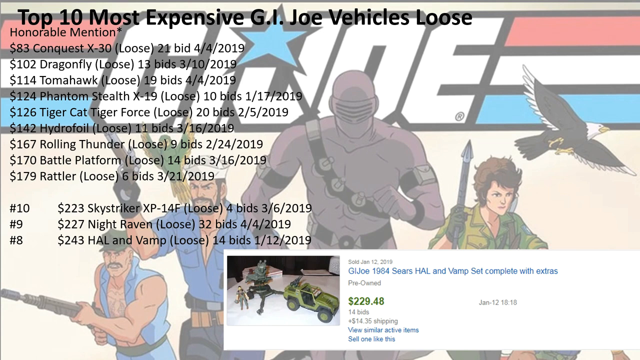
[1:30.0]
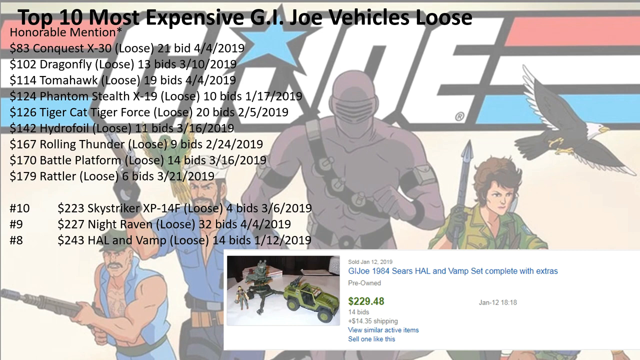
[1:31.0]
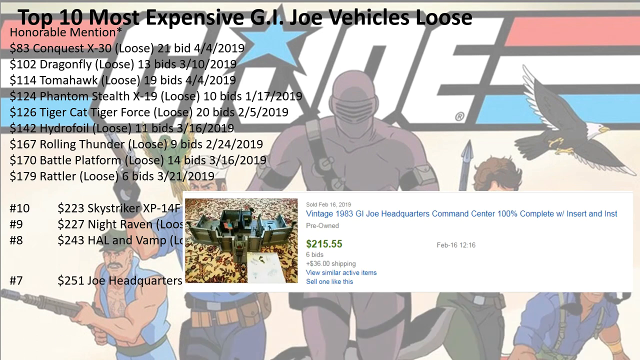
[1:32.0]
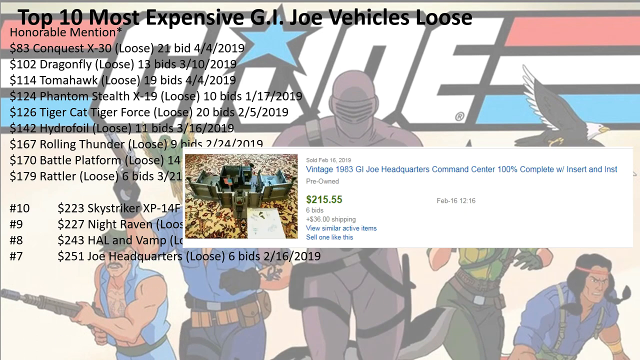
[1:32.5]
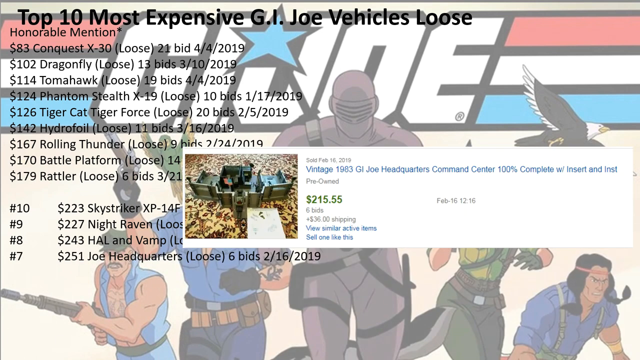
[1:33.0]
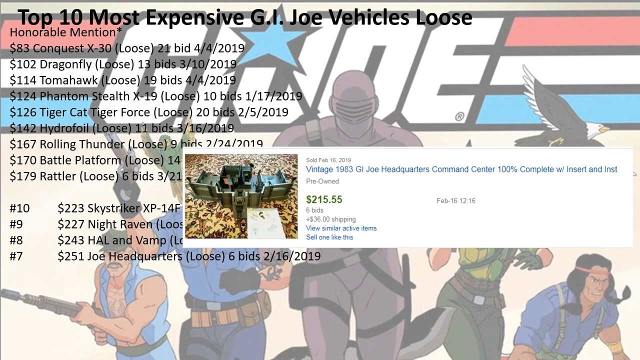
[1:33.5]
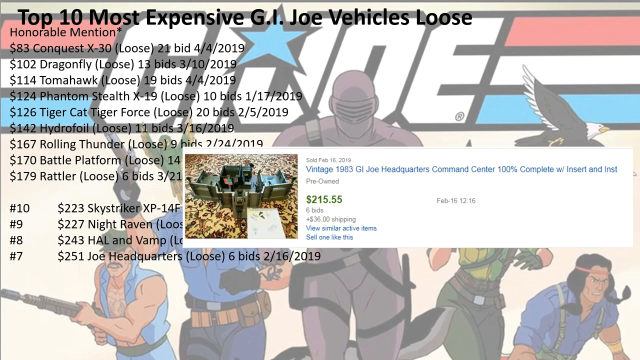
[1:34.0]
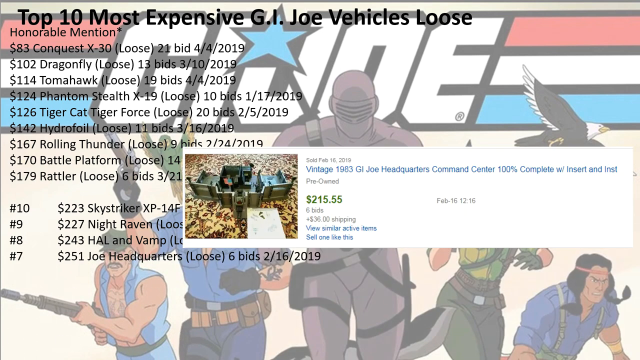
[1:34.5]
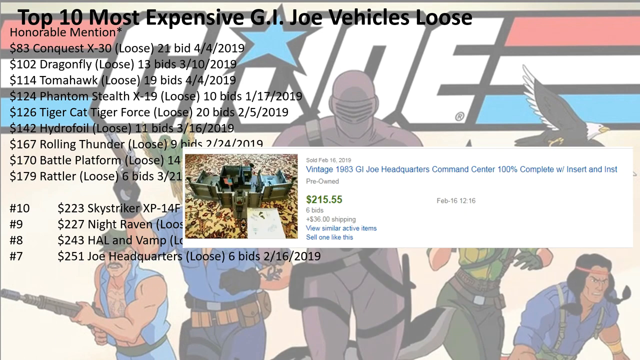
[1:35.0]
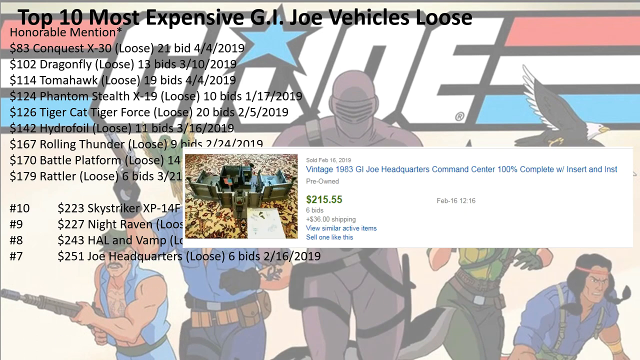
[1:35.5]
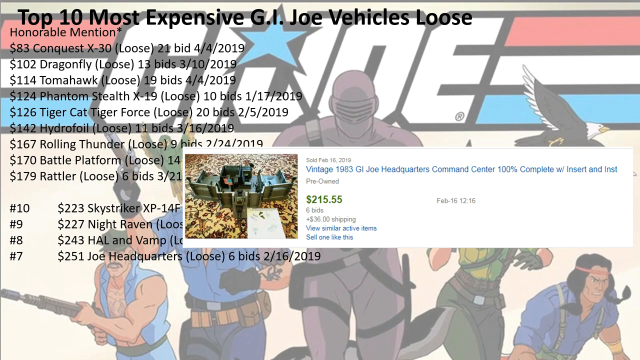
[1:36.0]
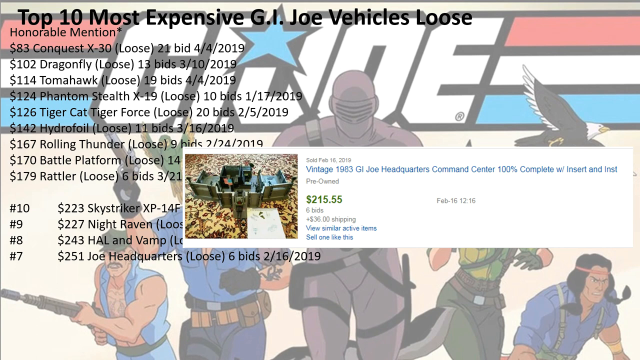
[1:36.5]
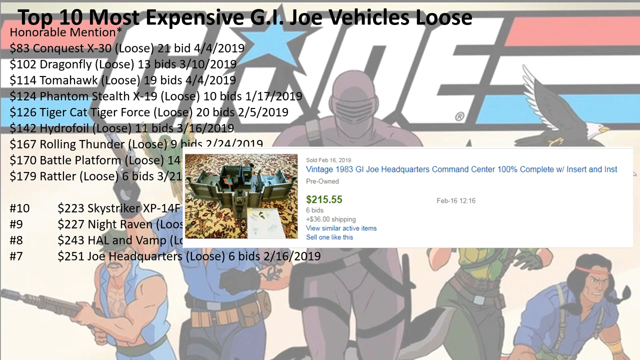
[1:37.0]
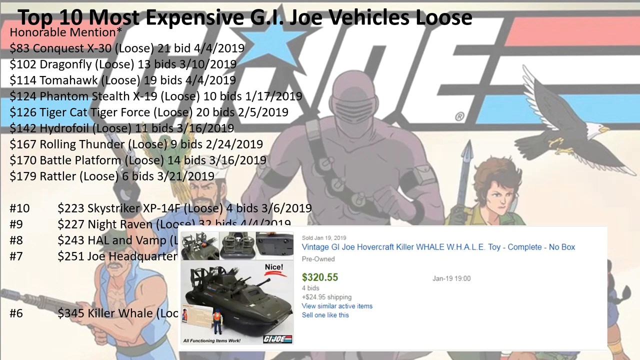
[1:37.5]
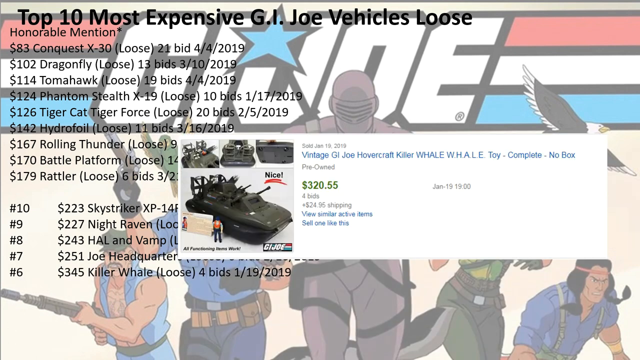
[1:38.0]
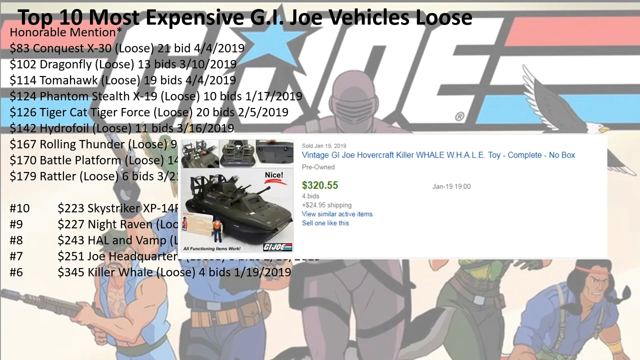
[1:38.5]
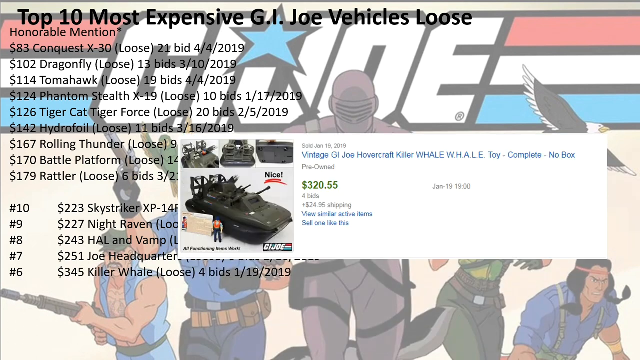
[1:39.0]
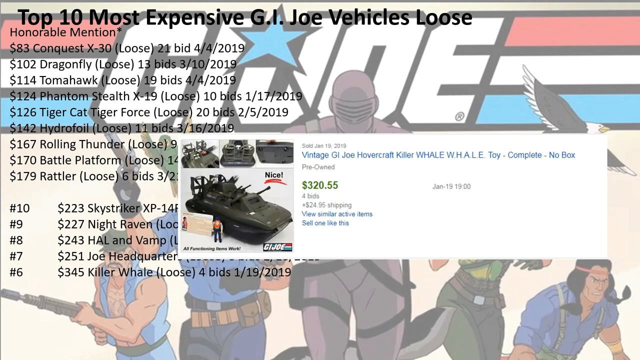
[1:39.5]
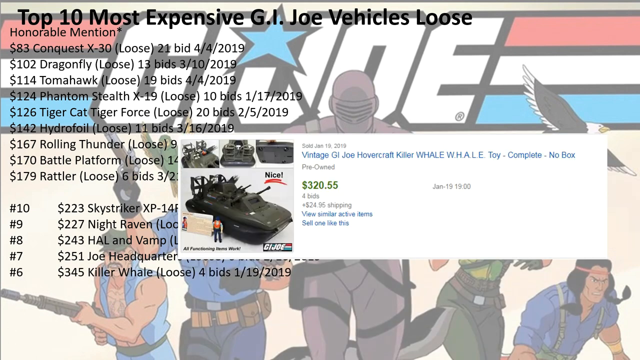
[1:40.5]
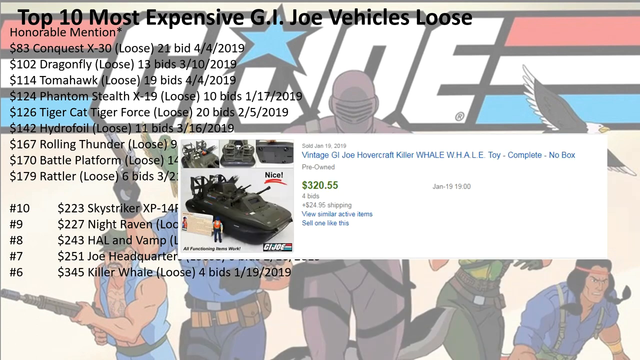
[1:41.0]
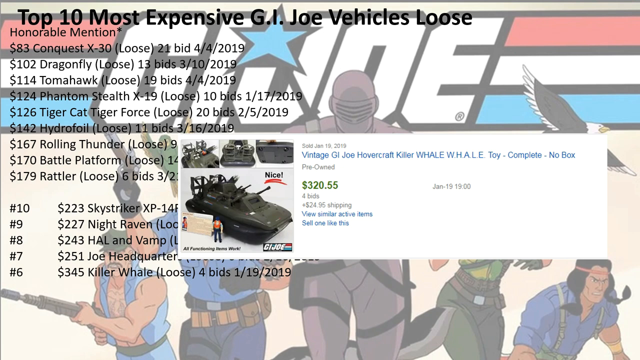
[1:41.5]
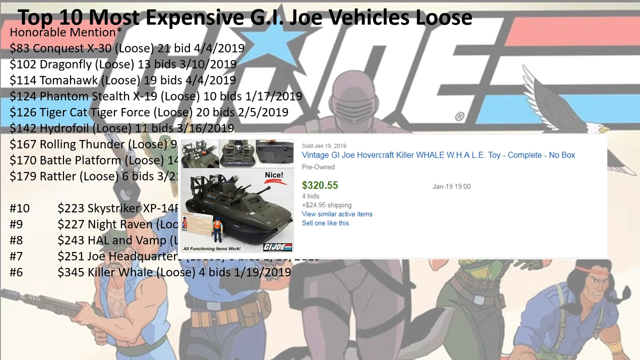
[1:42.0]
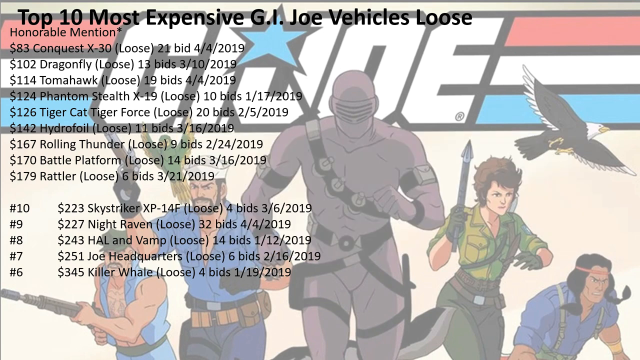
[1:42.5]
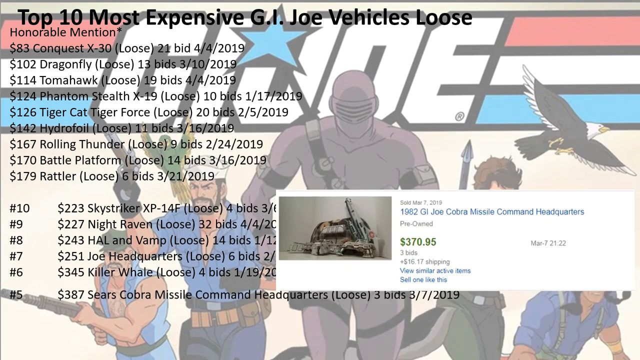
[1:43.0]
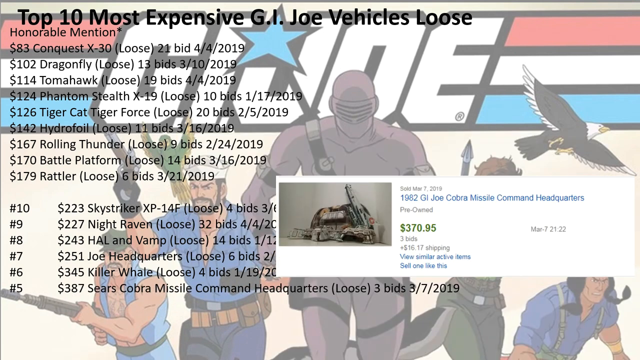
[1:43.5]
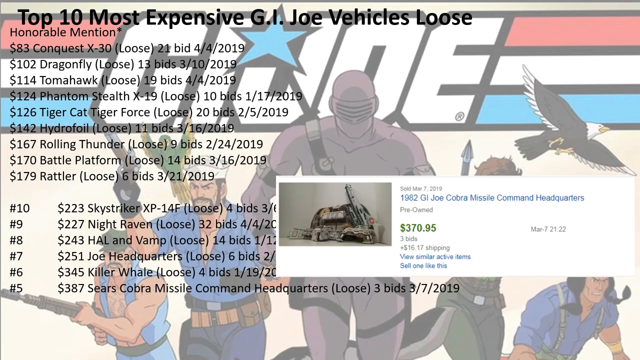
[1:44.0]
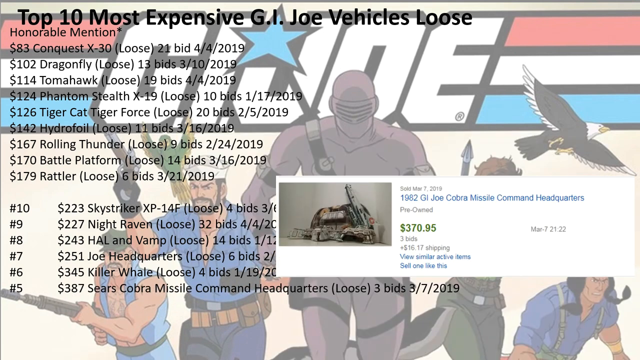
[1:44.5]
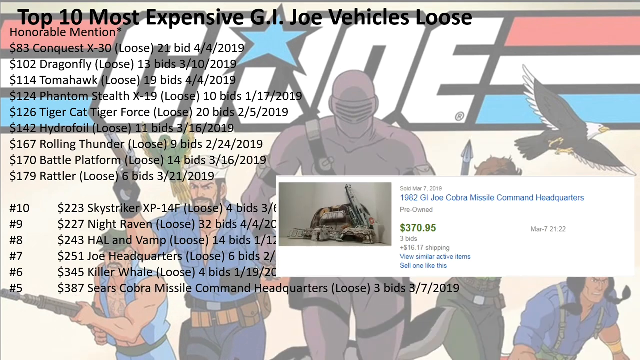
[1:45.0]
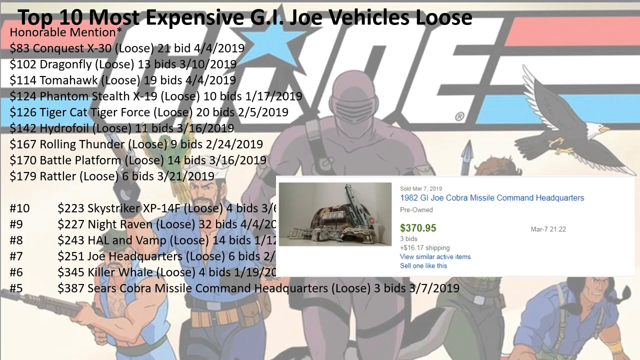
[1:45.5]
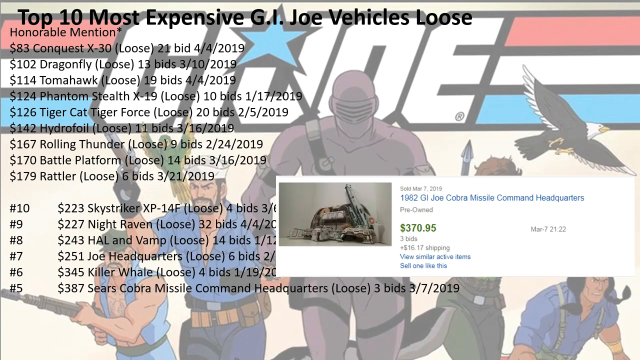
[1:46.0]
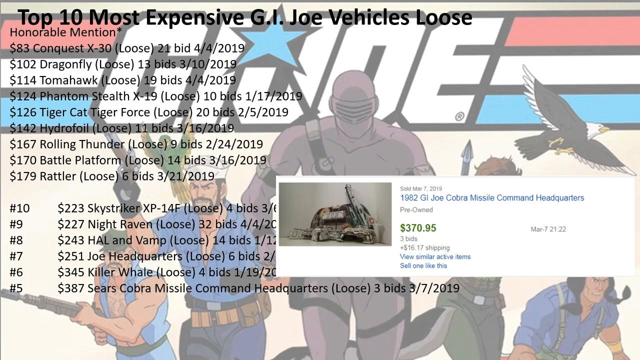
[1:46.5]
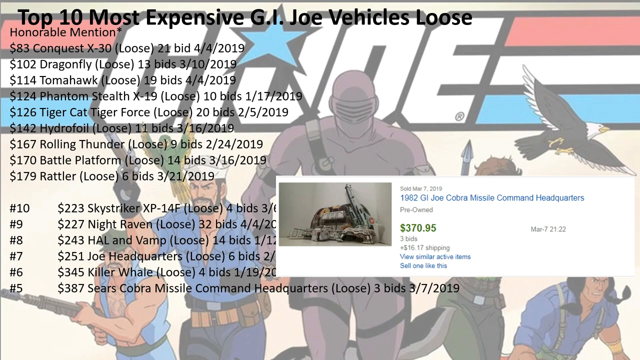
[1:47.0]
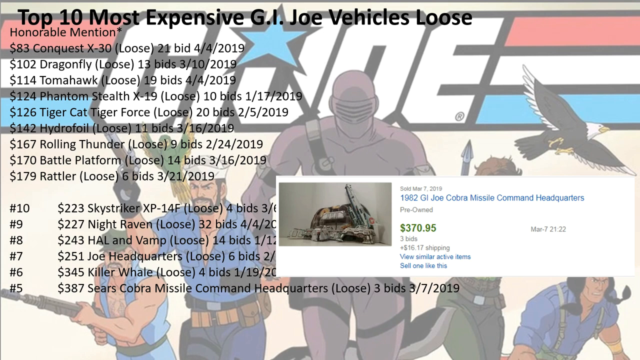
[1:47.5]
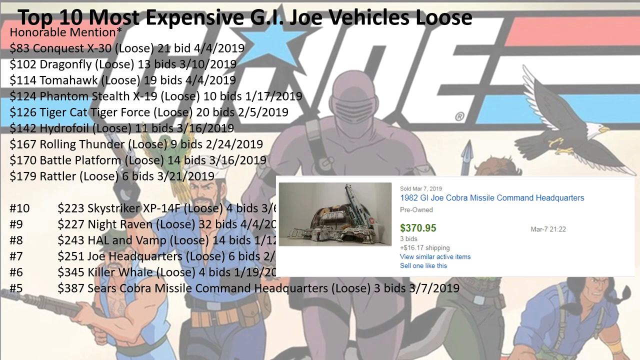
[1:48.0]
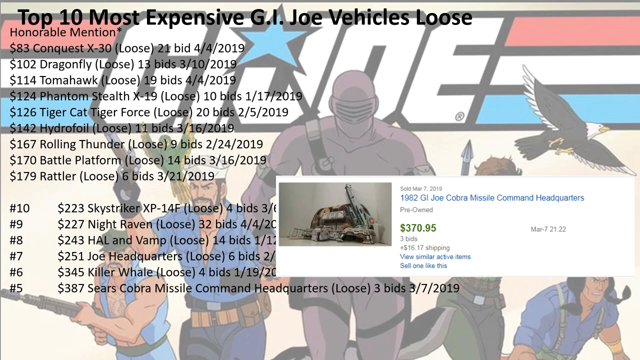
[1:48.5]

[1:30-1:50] The number 8 spot is still shown. Next comes the number 7 spot, the $251 Joe headquarters, with six bids, sold on February 16, 2019; the listing title is "Vintage 1983 G.I. Joe Headquarters Command Center, 100% complete", with a price of $215.55 and $36 shipping. Then the number 6 spot appears: the $345 Killer Whale with four bids, sold on January 19, 2019, titled "Vintage G.I. Joe Hovercraft Killer Whale toy complete with no box", at $320.55 with $24.95 in shipping. The number 5 spot follows: the $387 Sears Cobra Missile Command Headquarters, sold on March 7, 2019, titled "1982 G.I. Joe Cobra Missile Command Headquarters", with an item price of $350.95 and $16.17 in shipping.